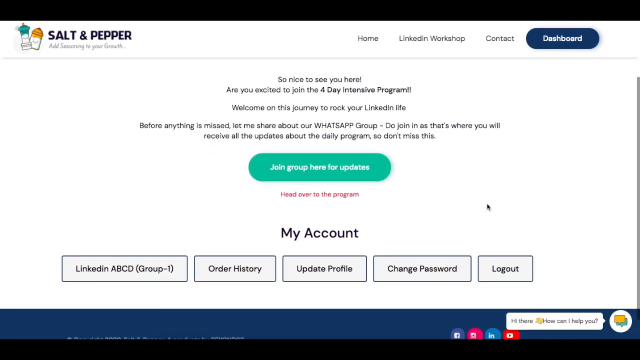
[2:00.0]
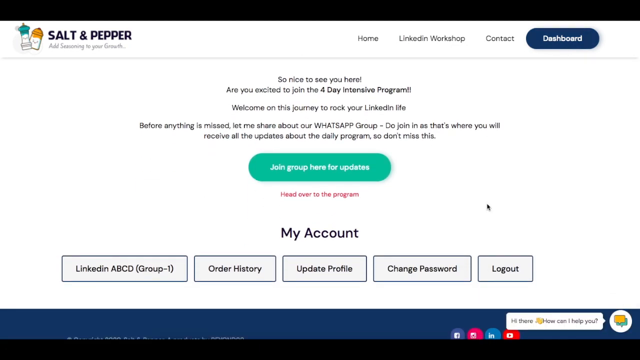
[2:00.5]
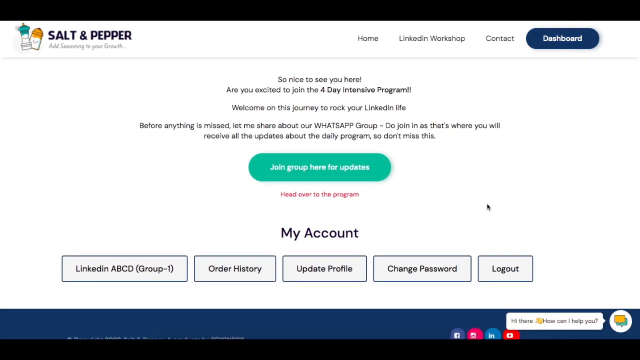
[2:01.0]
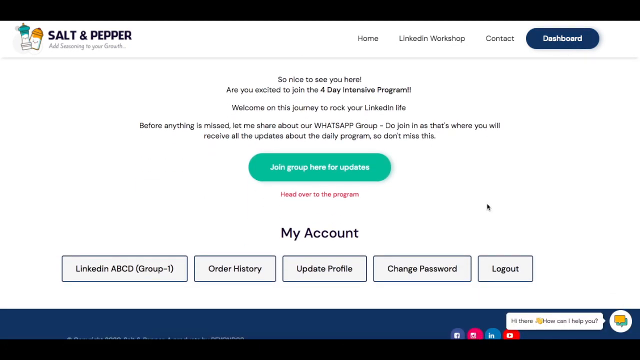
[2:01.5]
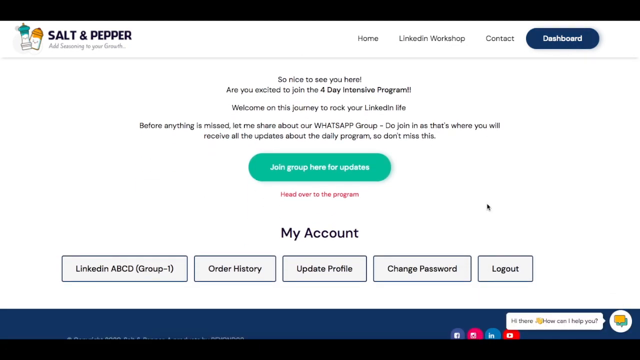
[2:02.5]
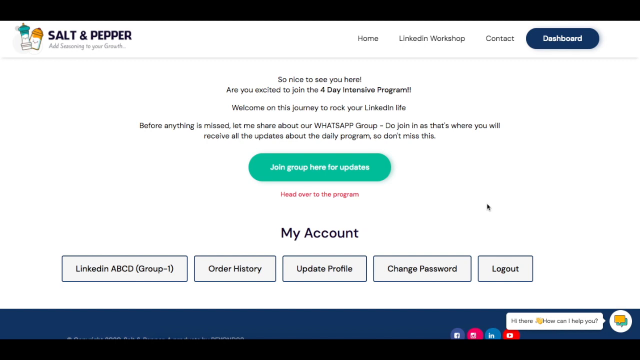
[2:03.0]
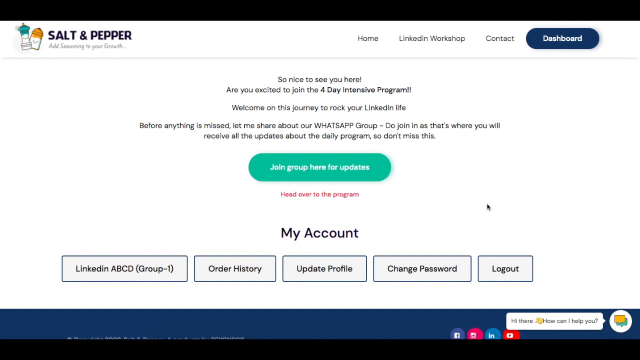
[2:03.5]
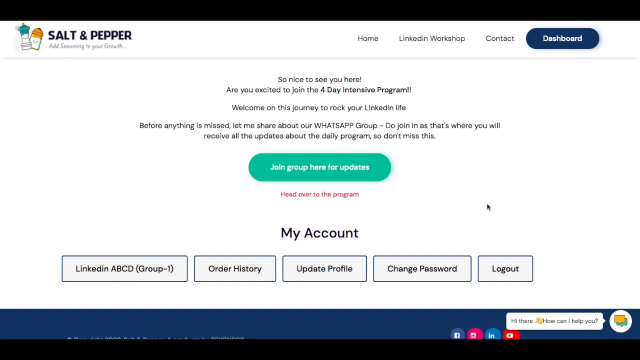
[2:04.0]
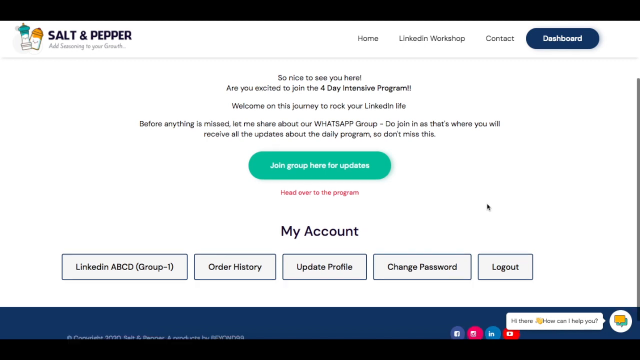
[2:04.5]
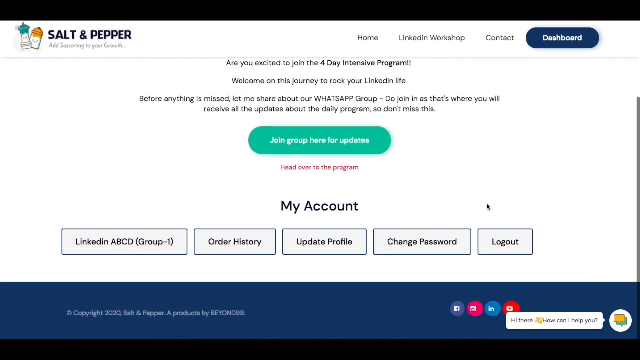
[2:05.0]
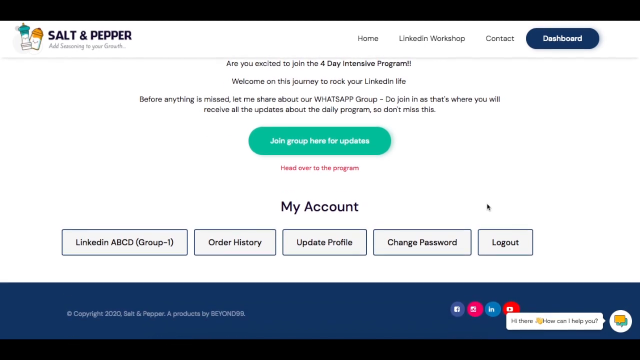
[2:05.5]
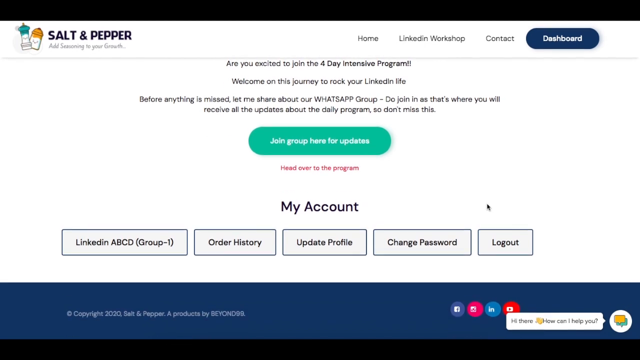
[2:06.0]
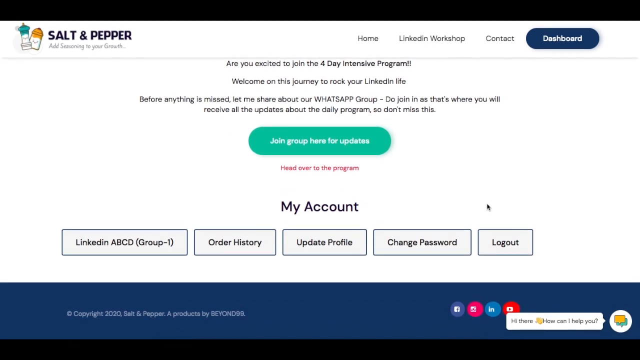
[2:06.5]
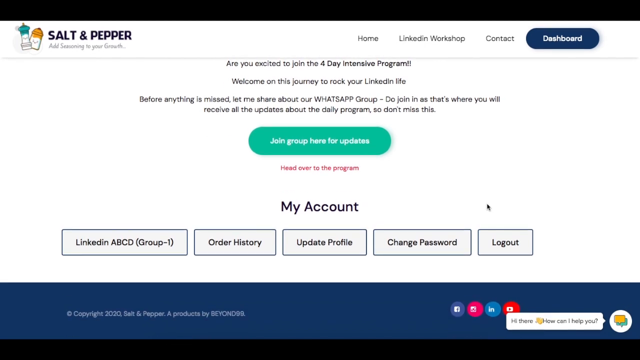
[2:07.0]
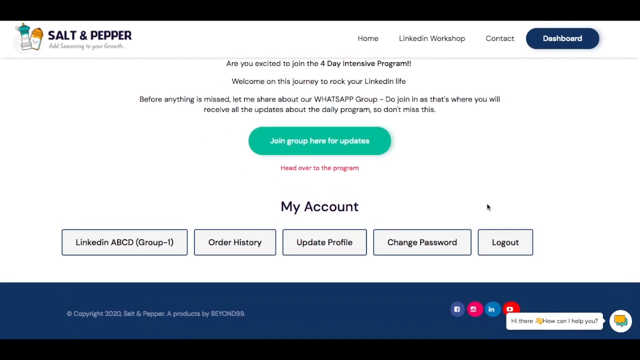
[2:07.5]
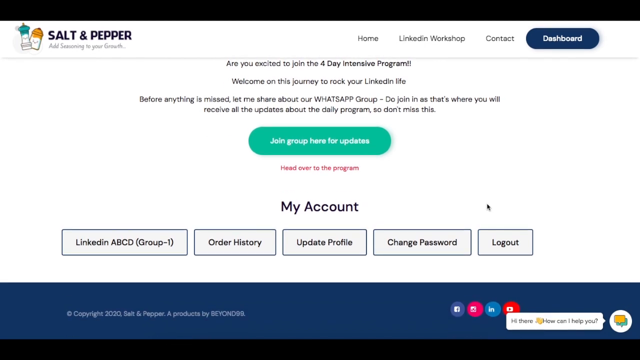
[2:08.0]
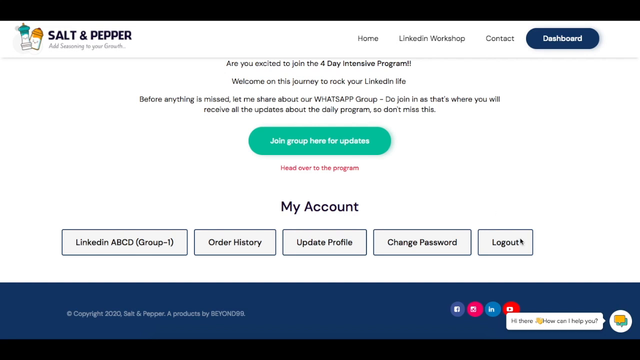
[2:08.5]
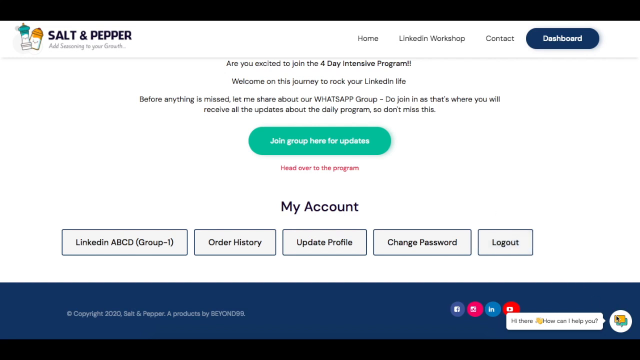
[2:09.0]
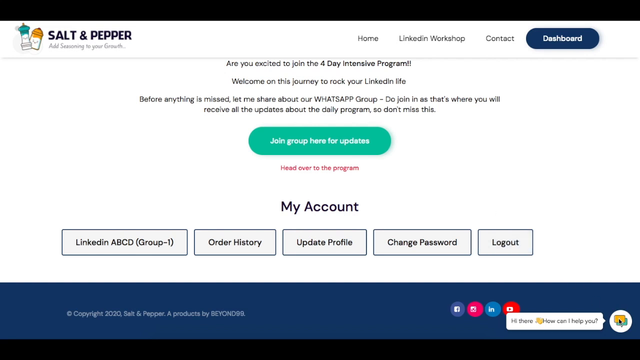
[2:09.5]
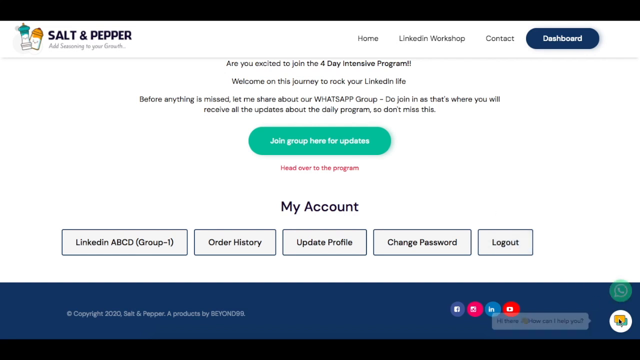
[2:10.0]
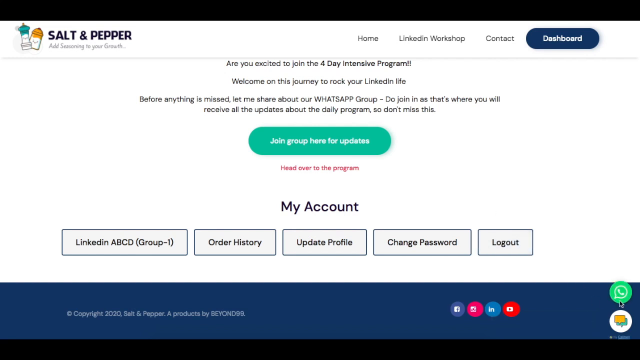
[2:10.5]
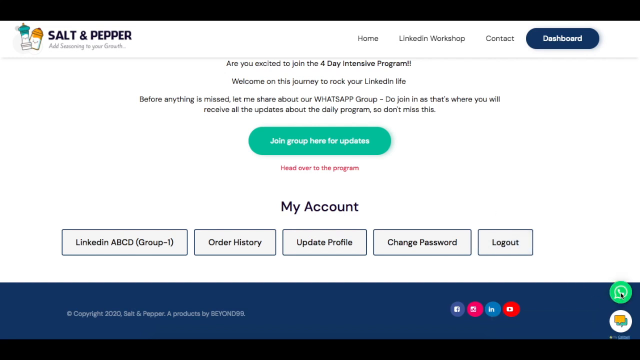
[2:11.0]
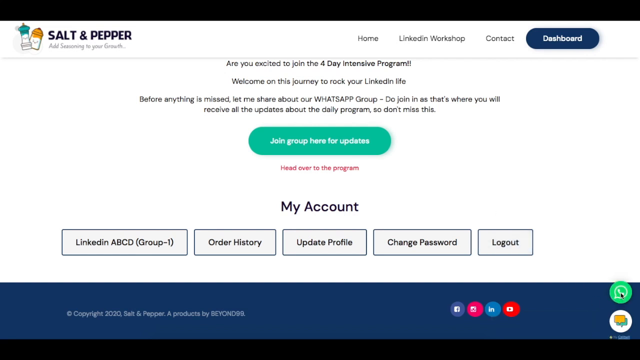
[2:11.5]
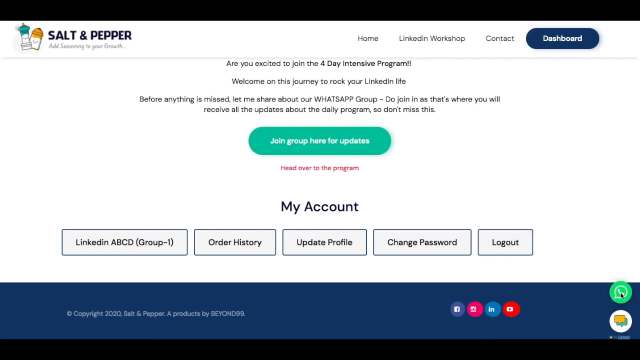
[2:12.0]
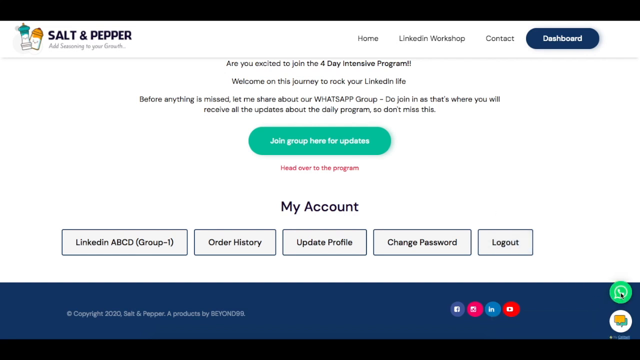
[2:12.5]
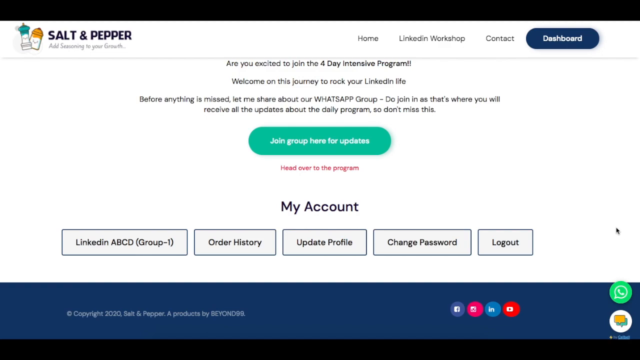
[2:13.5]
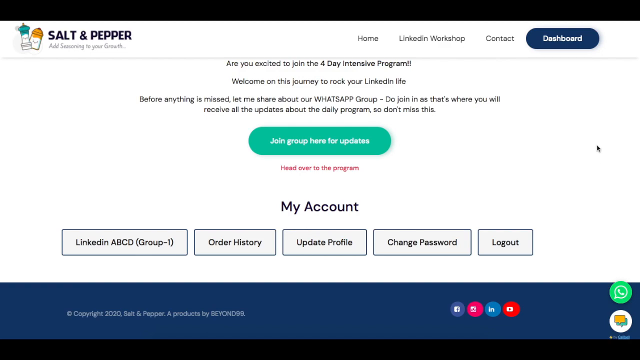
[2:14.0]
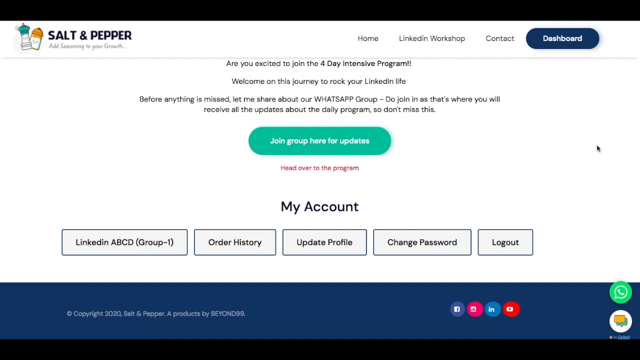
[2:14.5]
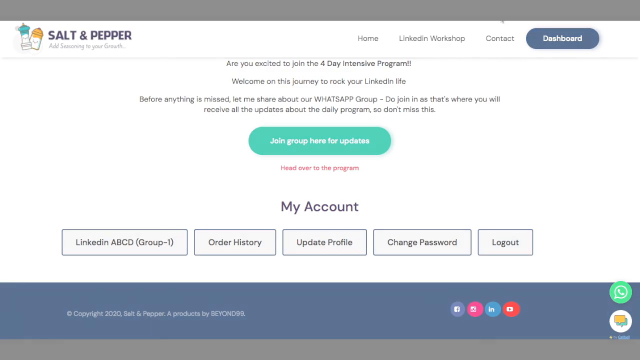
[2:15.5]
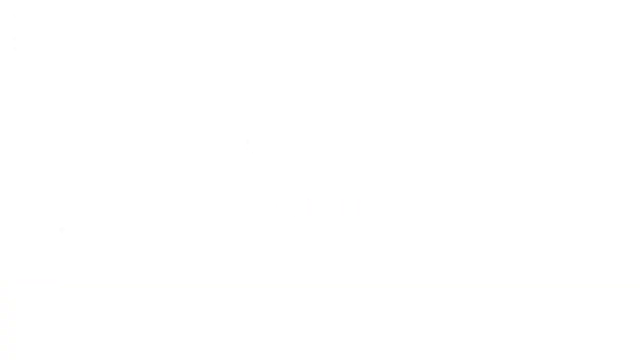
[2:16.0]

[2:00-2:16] The bottom portion of the My Dashboard page is shown, with the cursor held still on the right center of the screen for several seconds. The page holds still for a few seconds before scrolling downward to the bottom section of the webpage, a dark blue banner with a chat box feature on the right side. The clickable text button reads "hi there, how can we help you?" The cursor moves to the chat box as if about to click it, and the button becomes highlighted in response, but the cursor does not click. It scrolls away without making any selection, settling back at the middle of the page. The video then quickly fades out to white and stops on a solid white screen.